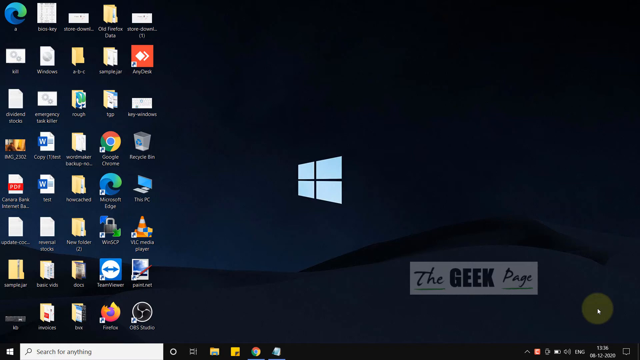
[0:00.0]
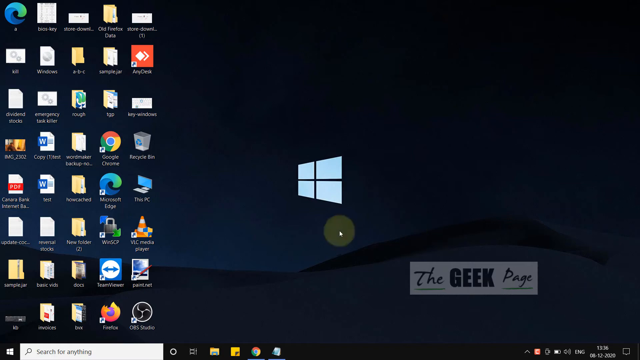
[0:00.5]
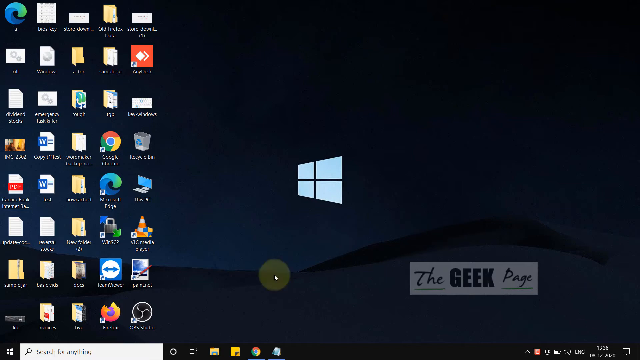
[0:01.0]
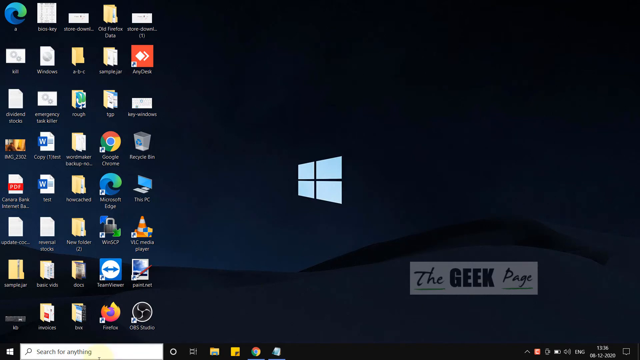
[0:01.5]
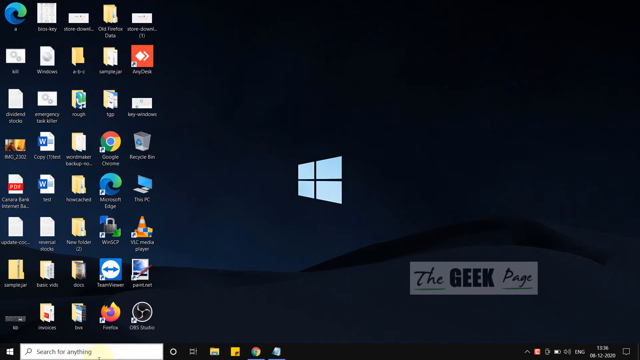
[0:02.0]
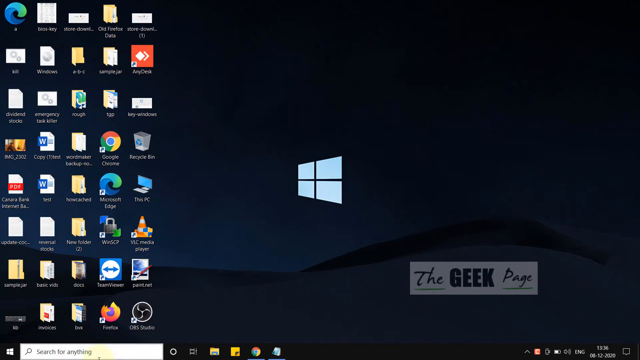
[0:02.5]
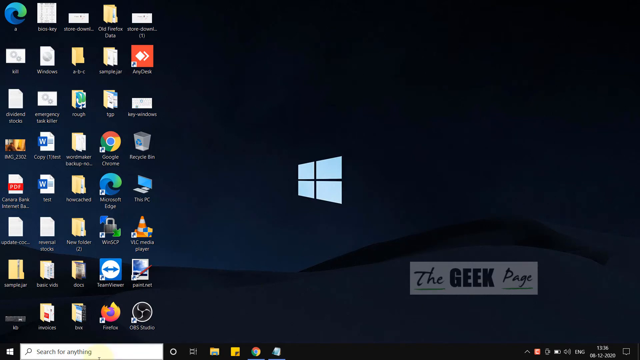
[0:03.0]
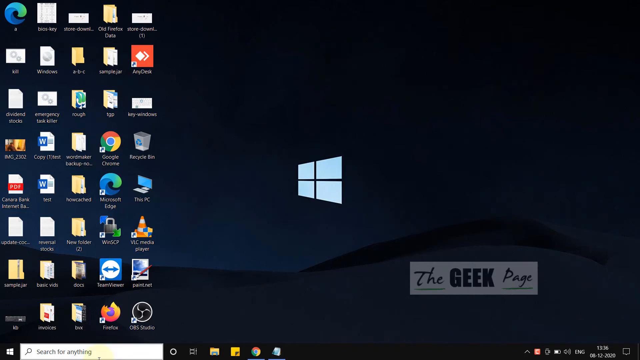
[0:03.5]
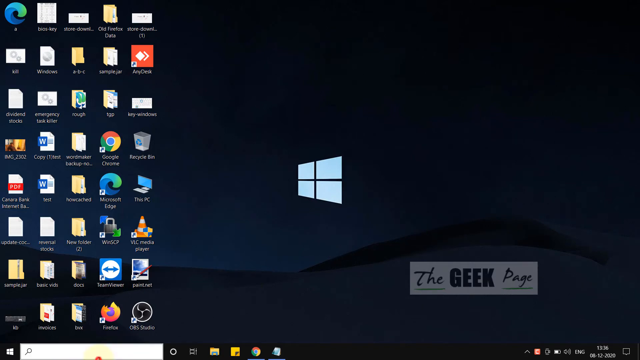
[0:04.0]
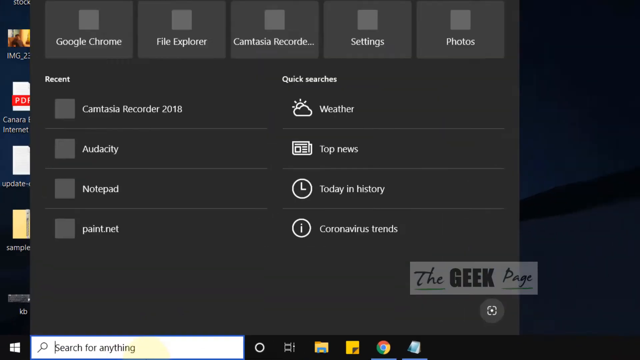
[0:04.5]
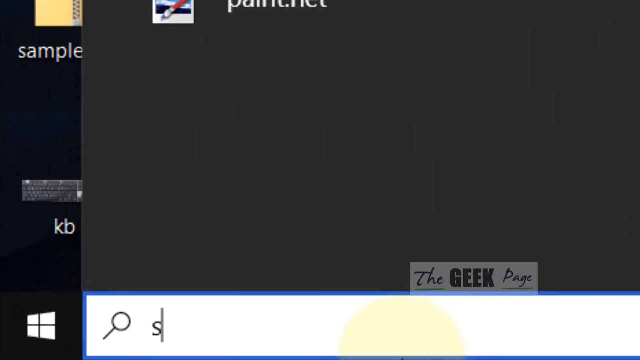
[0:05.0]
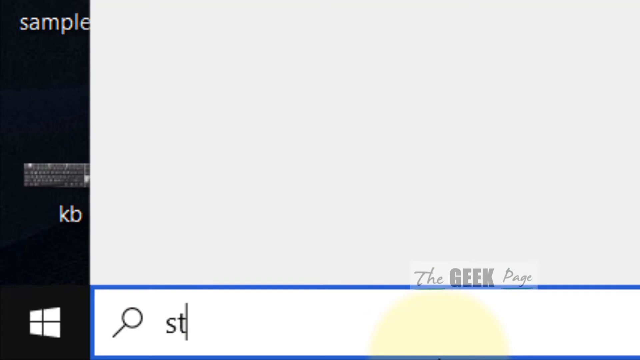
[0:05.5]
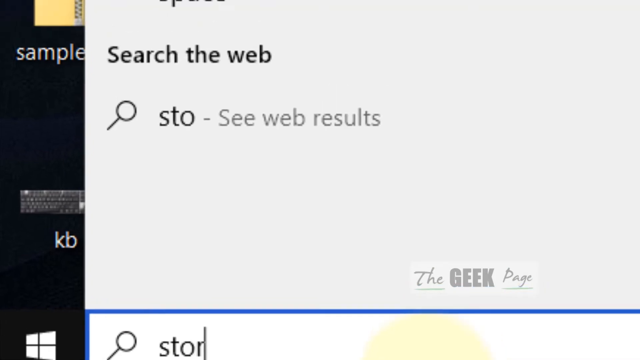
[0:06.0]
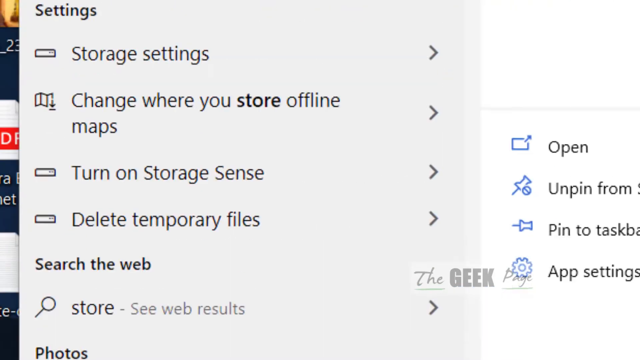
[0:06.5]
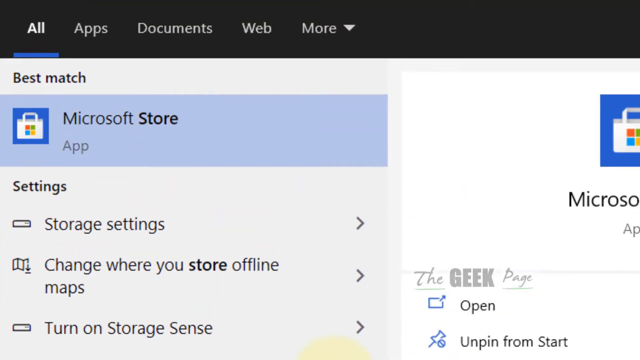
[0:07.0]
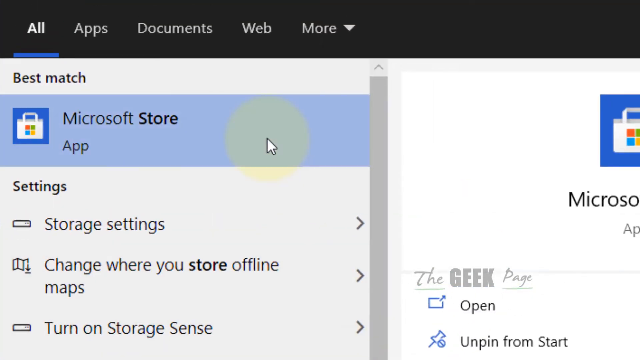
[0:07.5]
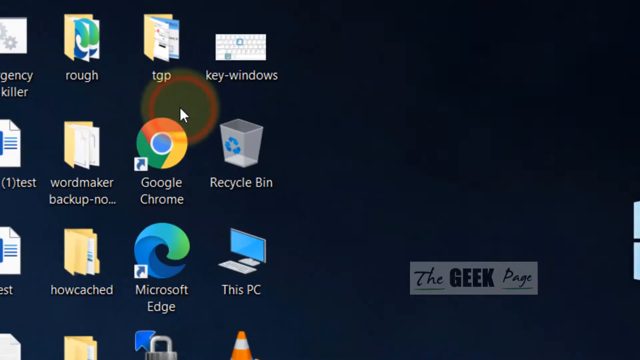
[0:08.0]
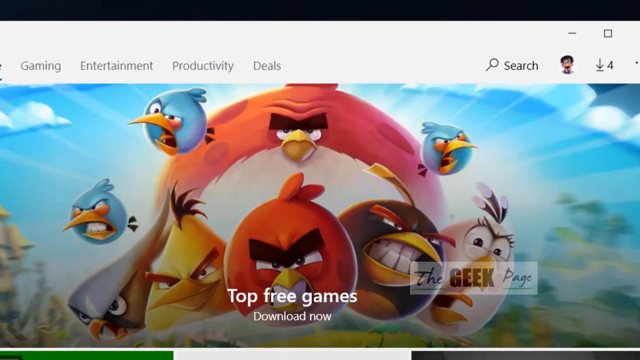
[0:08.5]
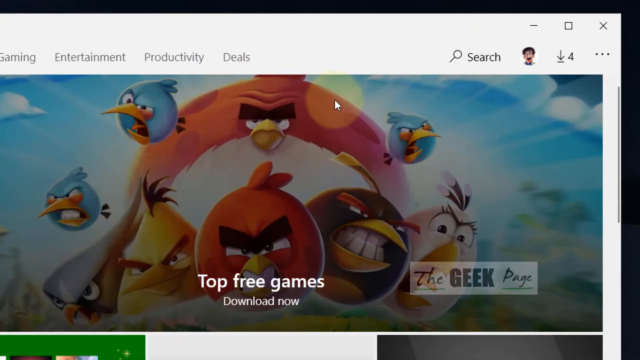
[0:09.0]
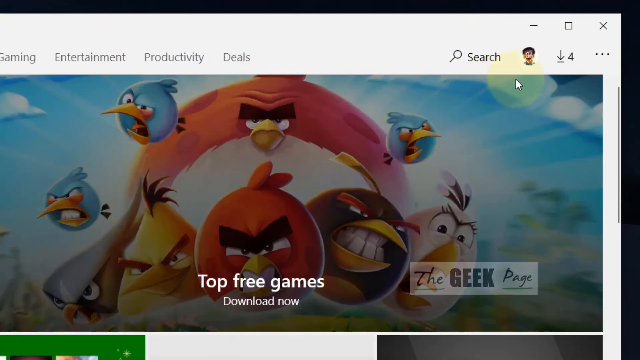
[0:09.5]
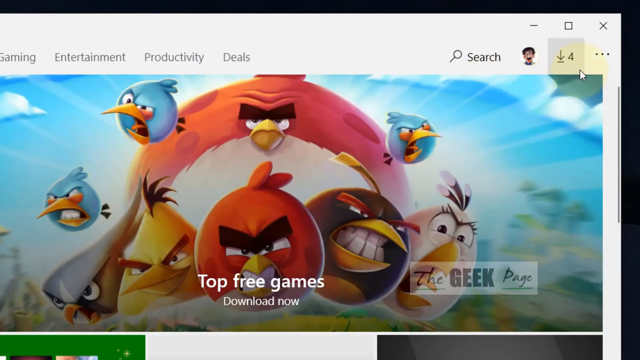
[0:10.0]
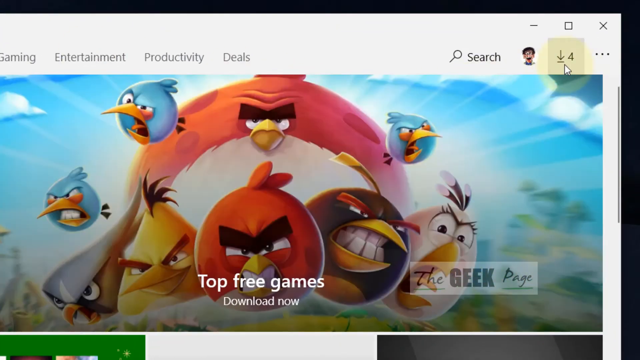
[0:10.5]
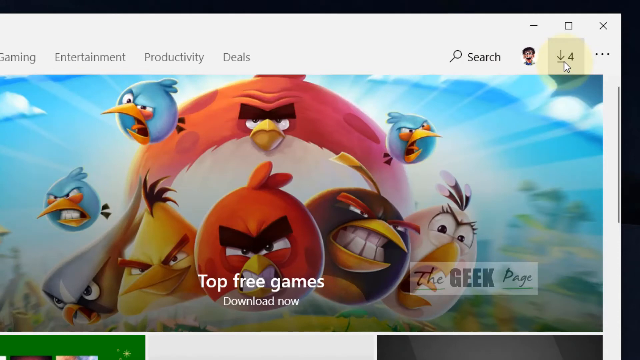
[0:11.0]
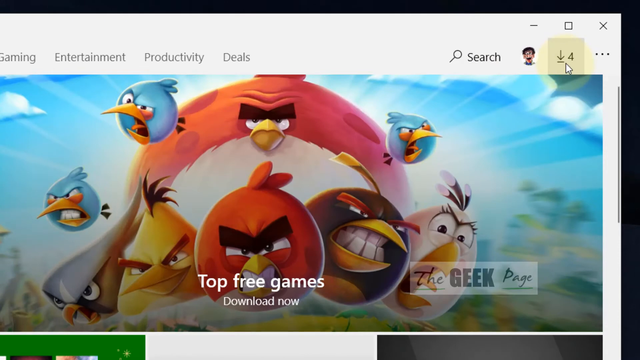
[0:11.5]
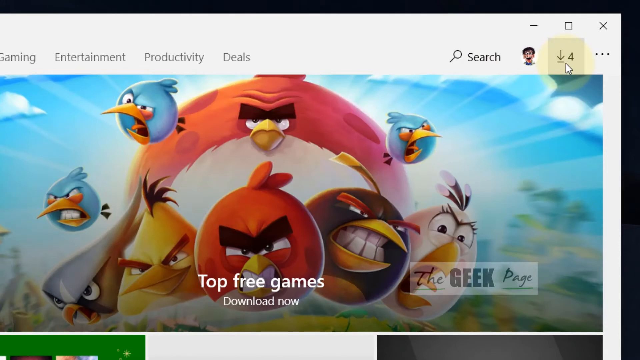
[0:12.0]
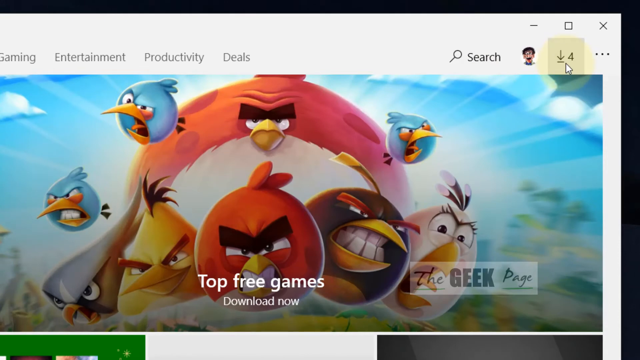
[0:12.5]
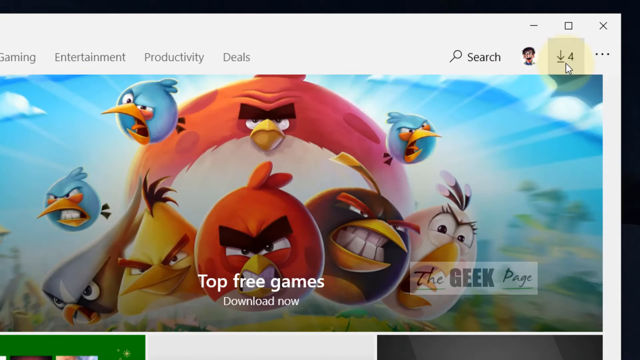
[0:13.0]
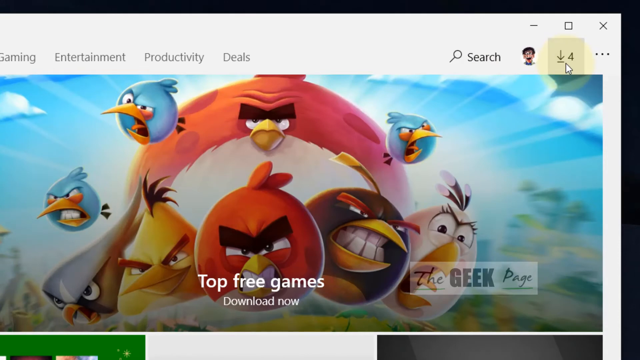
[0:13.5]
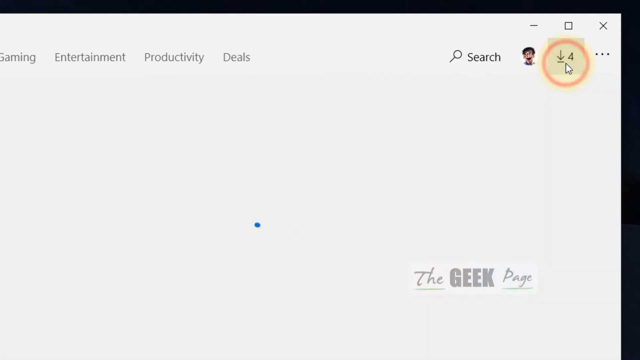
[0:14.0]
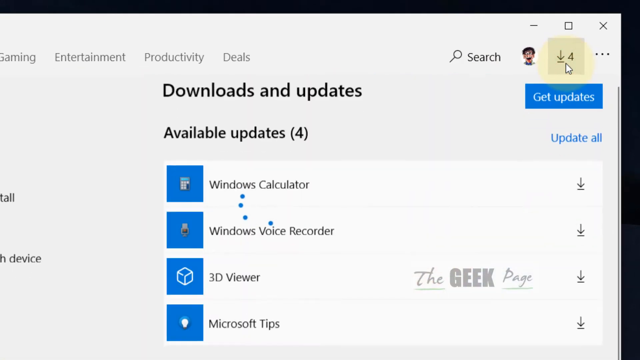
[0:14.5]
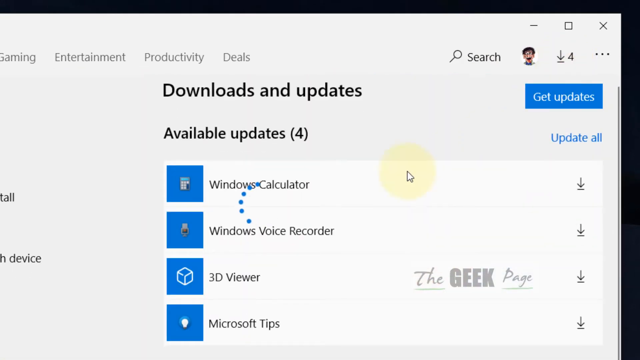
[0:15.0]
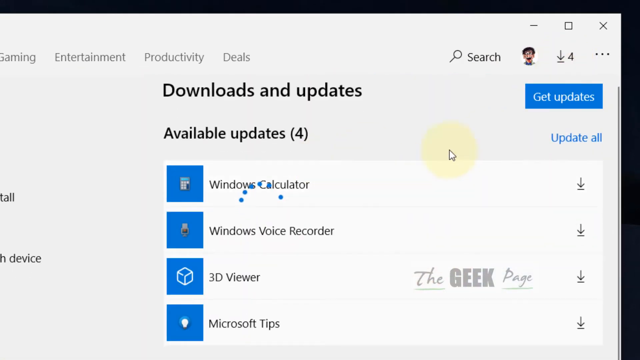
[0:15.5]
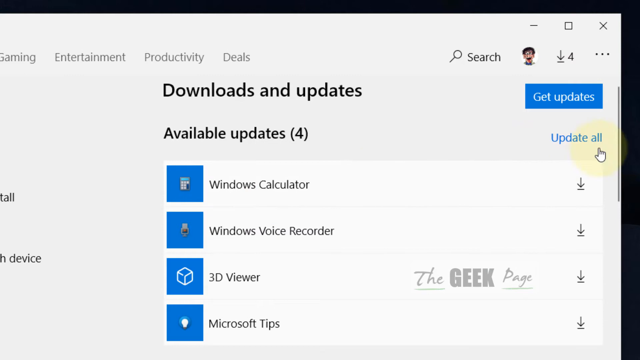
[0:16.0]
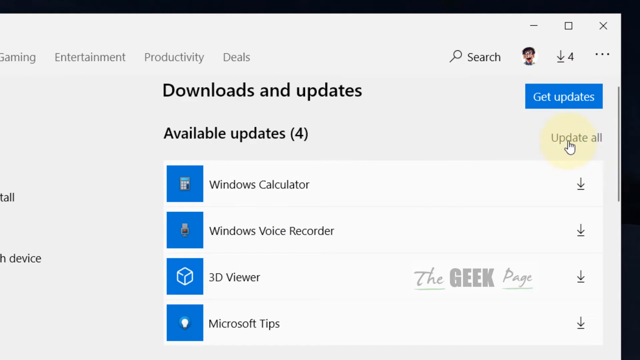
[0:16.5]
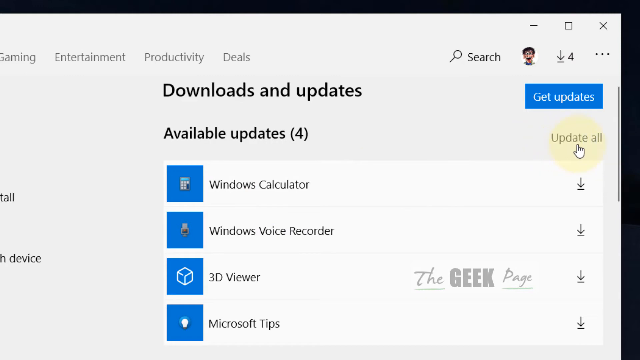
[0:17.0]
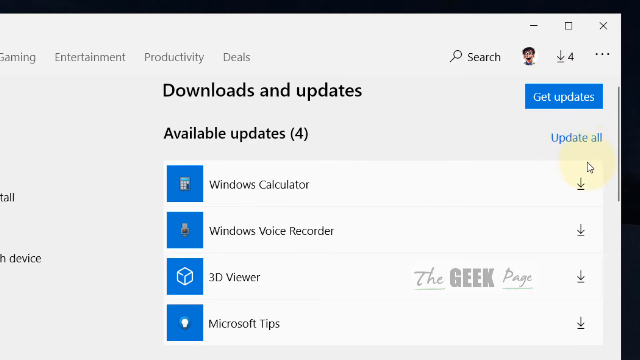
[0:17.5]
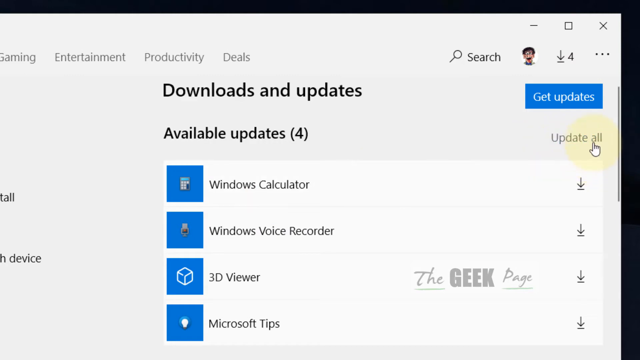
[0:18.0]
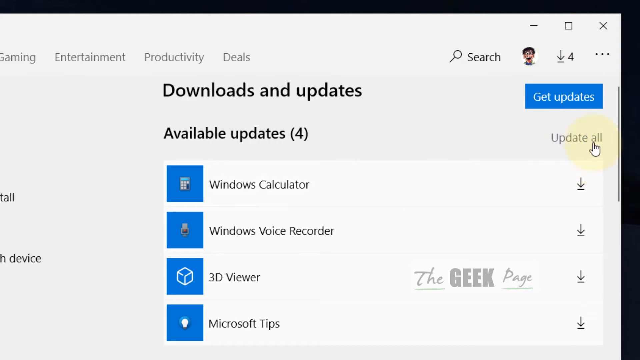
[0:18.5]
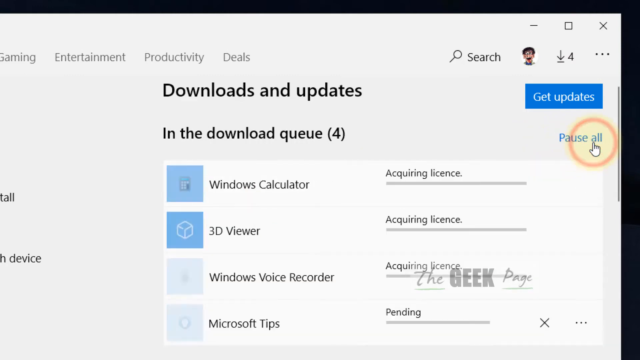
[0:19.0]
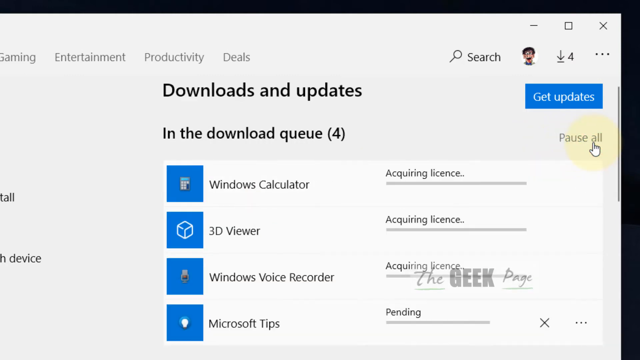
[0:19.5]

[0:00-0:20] A black screen of app icons appears, apparently on a monitor or laptop. In the lower right corner are the words "The Geek Page" against a small white banner, and the Windows icon is in the center of the black screen, which shows a nighttime black sky and the rolling outline of a mountain. Icons include Microsoft Edge in the upper left corner, Word in the center, Google Chrome center right, the Recycle Bin, which is a trash bin, and the Mozilla icon for Firefox, which looks like a flame. The image scrolls around with someone's mouse and ends up on a video game page reading "Top Free Games", with what appears to be the Angry Birds image of many cartoon-like birds with angry expressions on a colorful background. Across the top of the screen, from left to right in dark gray text, it reads "Gaming Entertainment Productivity Deals", and in the upper right there is a search bar with a user profile image of a cartoon man. The mouse is at a pull-down where the number 4 is highlighted with a down arrow. The top three games say "download now". Suddenly a new white page opens with the words "downloads and updates" and "available updates for" in black bold text. In the upper right corner is a blue button that says "get updates", and the mouse clicks on "update all" below it. The available updates are listed with icons, from top to bottom: Windows calculator, Windows voice recorder, 3D viewer and Microsoft tips. "The geek page" is still superimposed in the lower right corner.